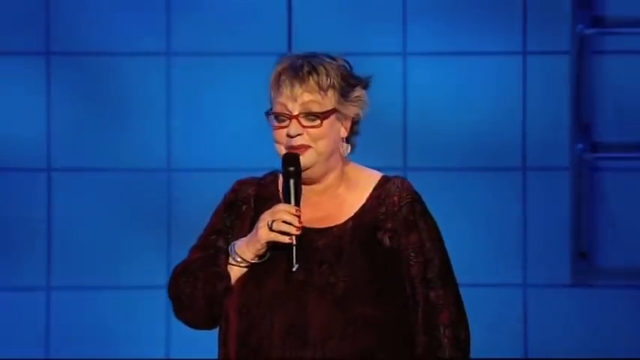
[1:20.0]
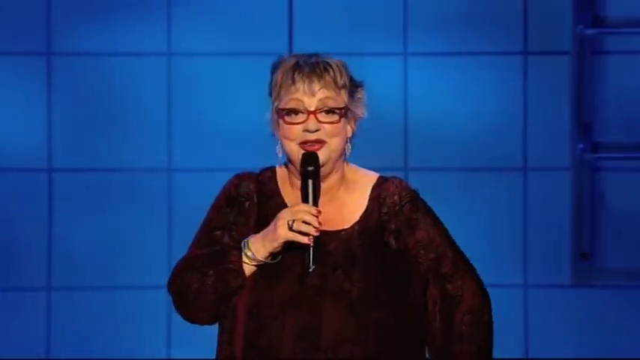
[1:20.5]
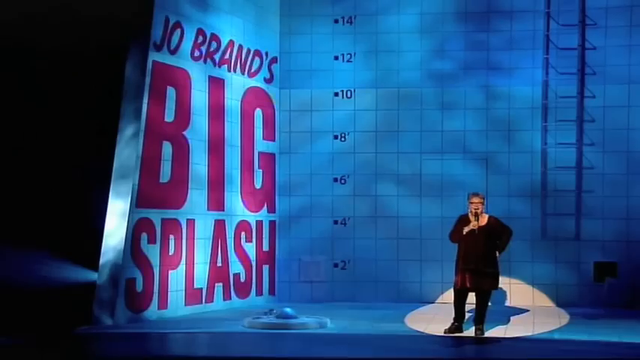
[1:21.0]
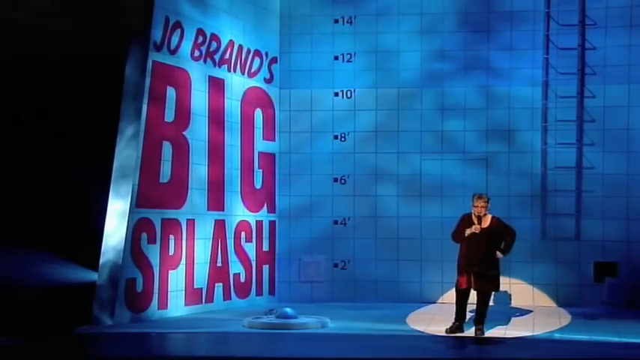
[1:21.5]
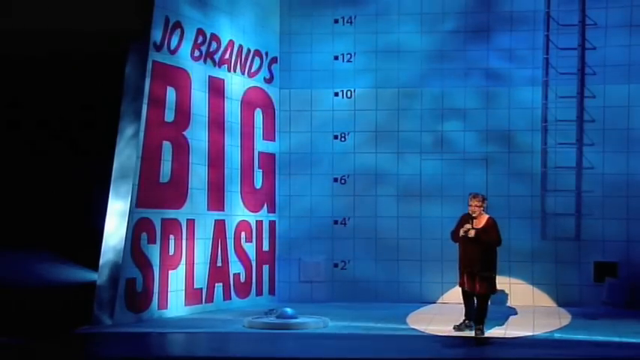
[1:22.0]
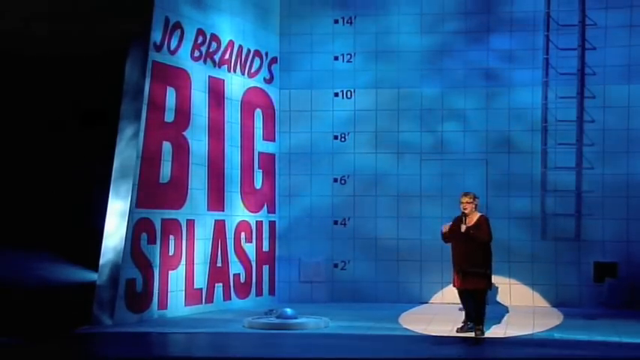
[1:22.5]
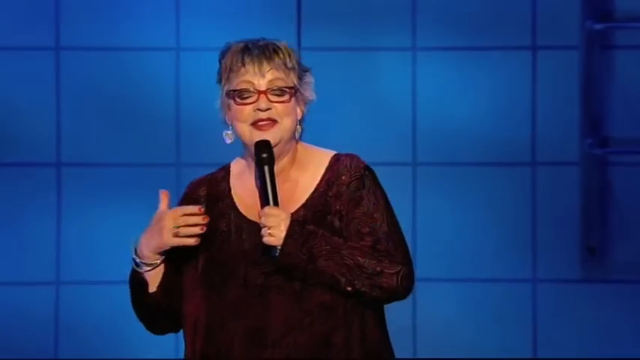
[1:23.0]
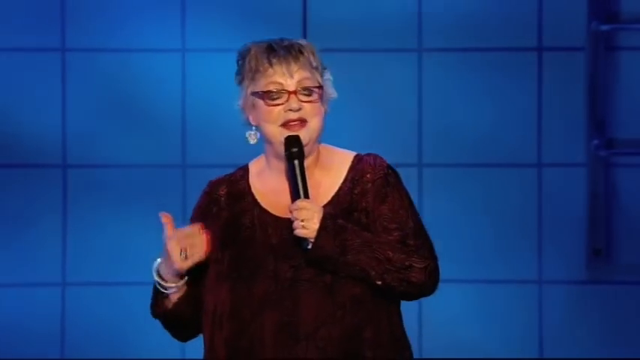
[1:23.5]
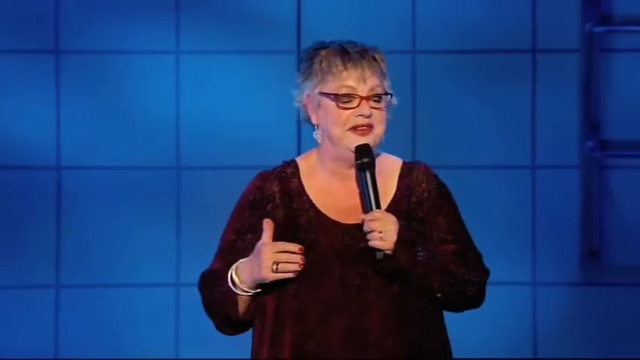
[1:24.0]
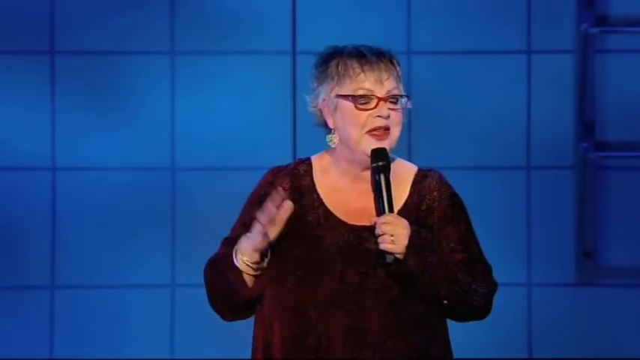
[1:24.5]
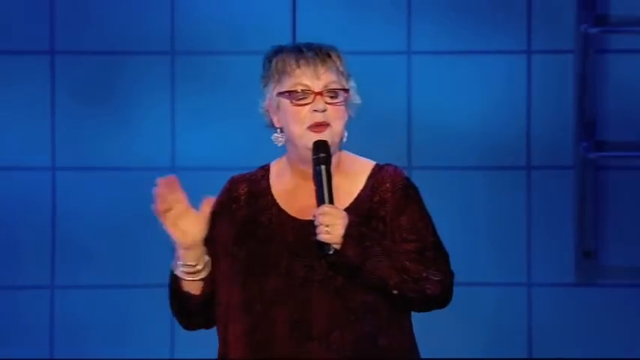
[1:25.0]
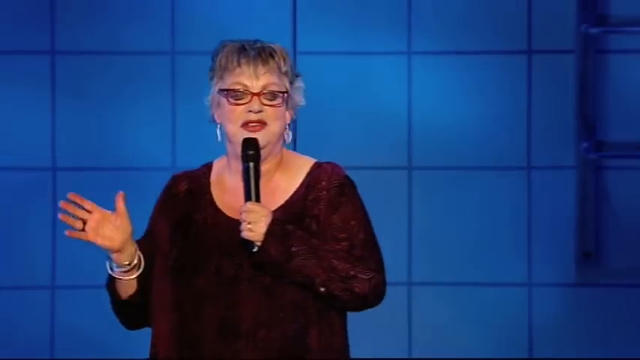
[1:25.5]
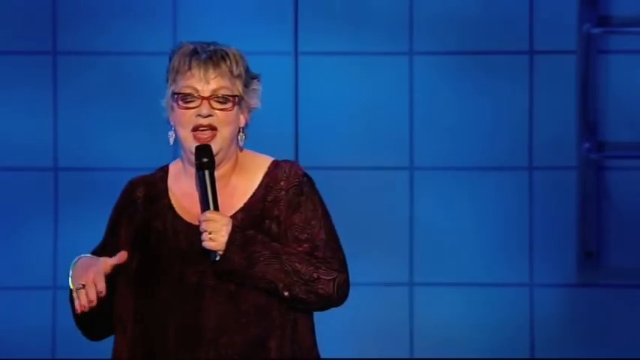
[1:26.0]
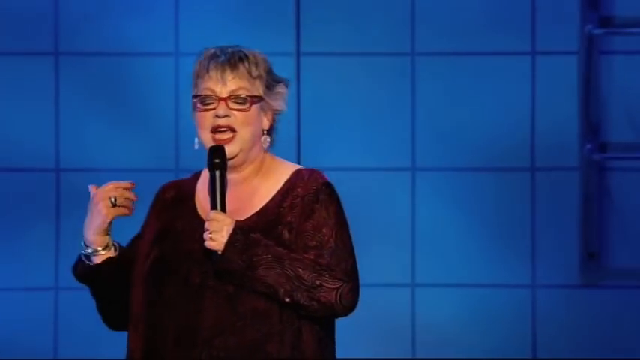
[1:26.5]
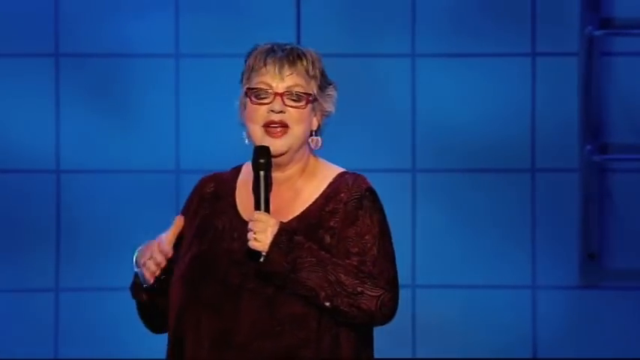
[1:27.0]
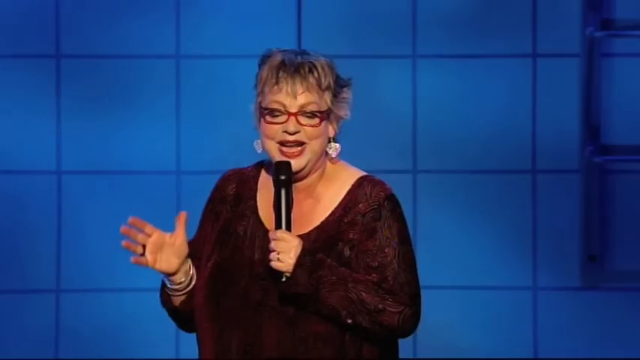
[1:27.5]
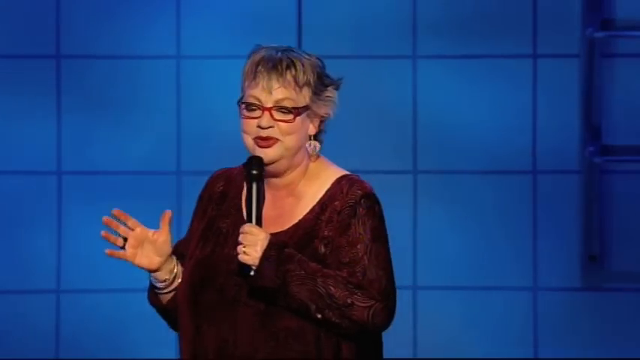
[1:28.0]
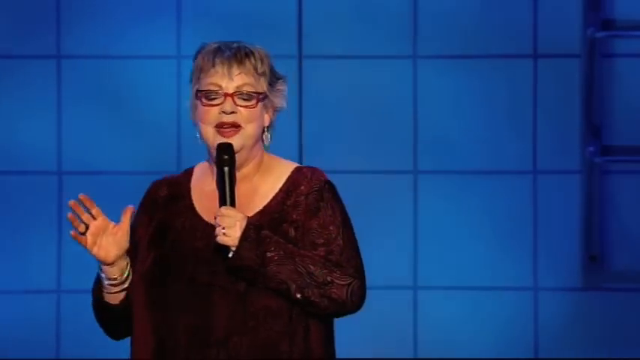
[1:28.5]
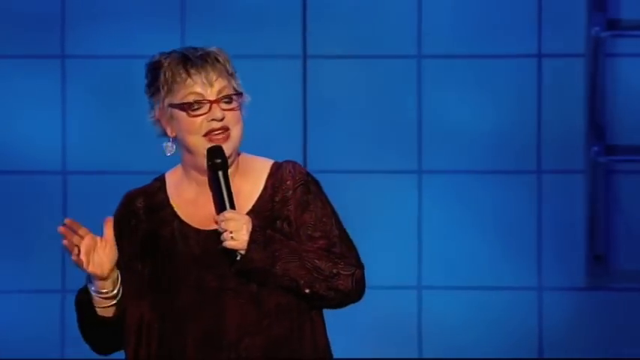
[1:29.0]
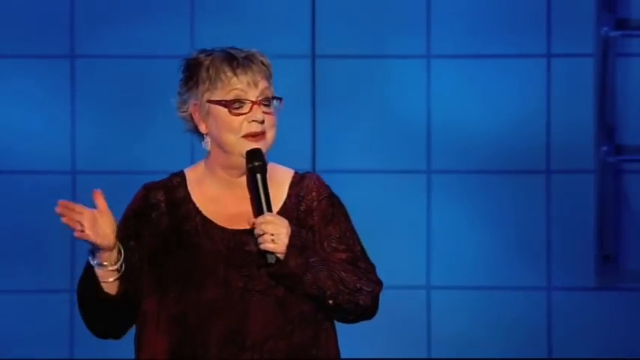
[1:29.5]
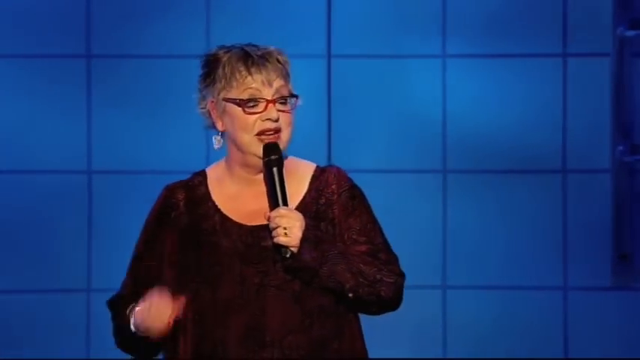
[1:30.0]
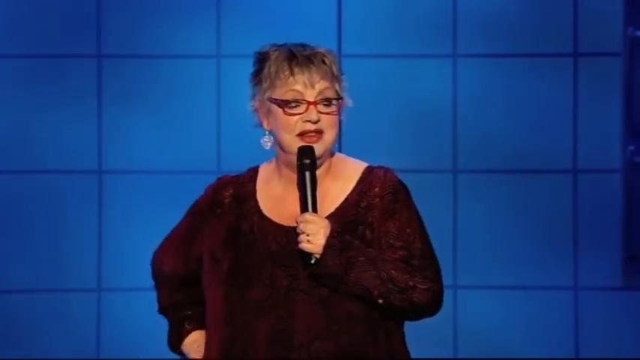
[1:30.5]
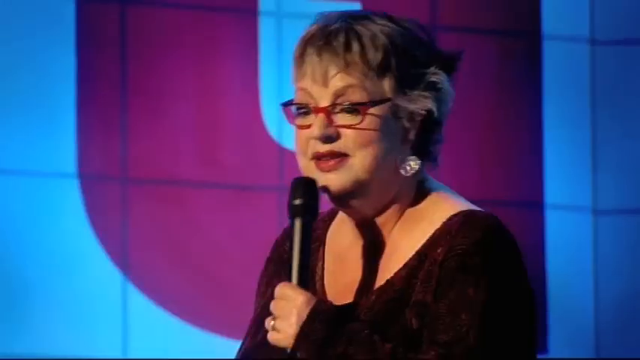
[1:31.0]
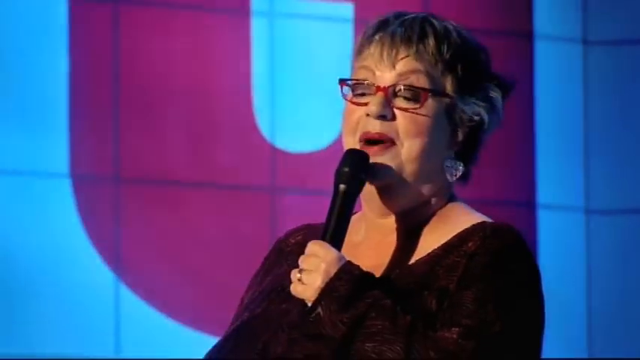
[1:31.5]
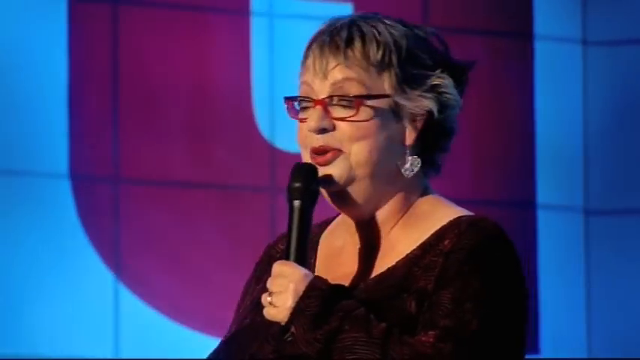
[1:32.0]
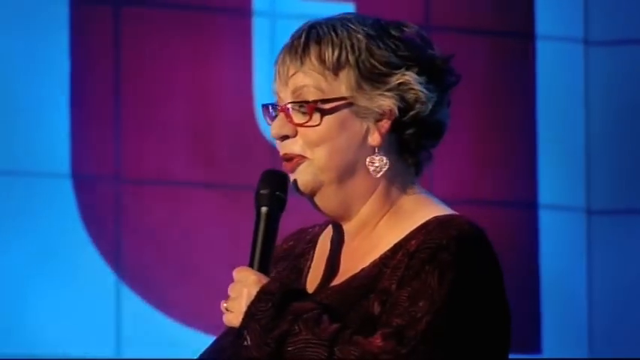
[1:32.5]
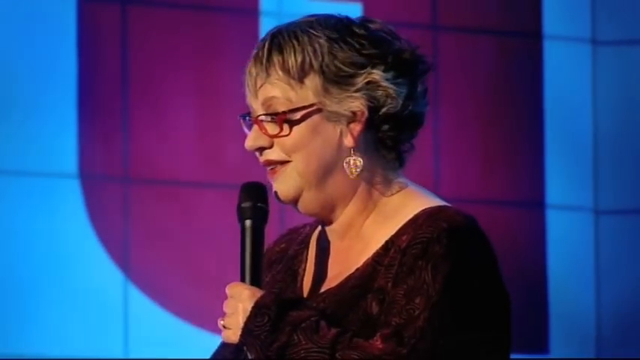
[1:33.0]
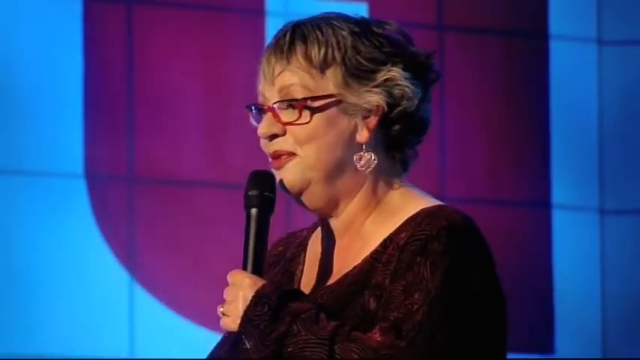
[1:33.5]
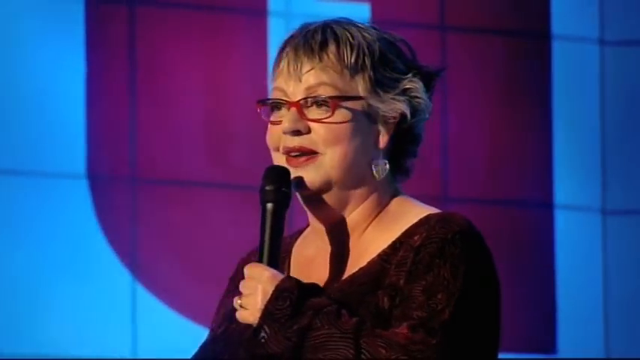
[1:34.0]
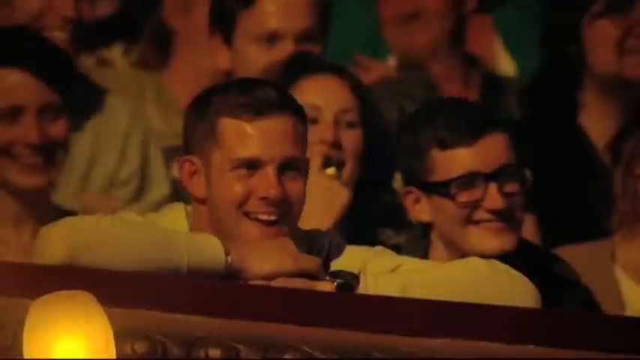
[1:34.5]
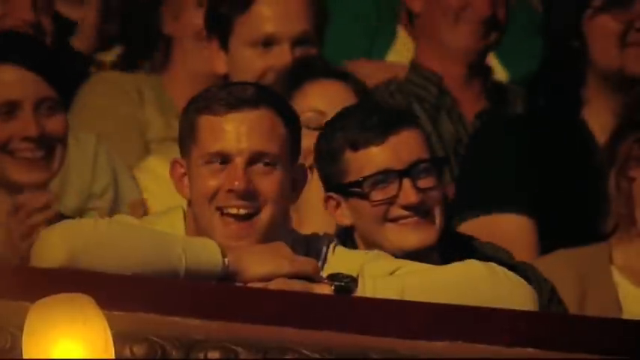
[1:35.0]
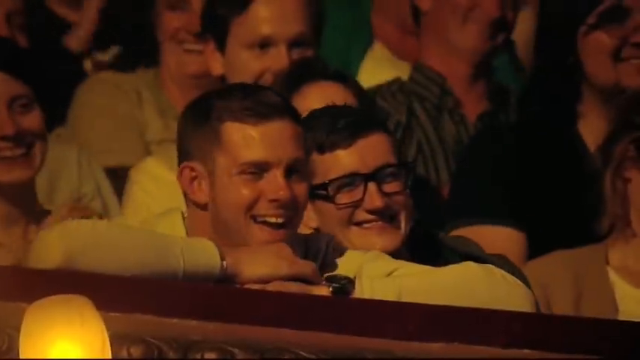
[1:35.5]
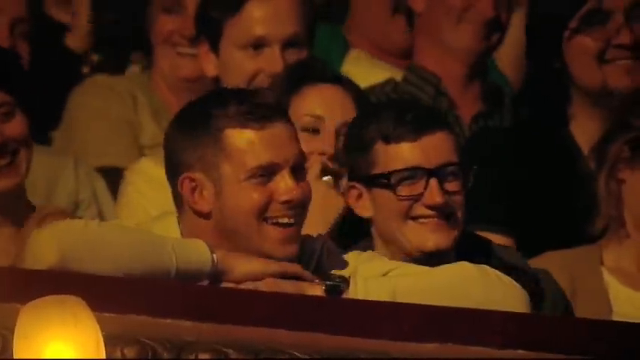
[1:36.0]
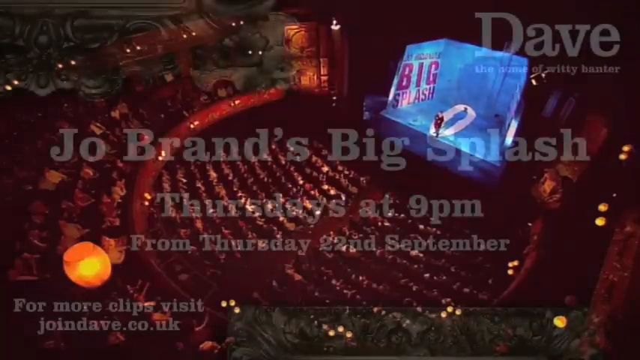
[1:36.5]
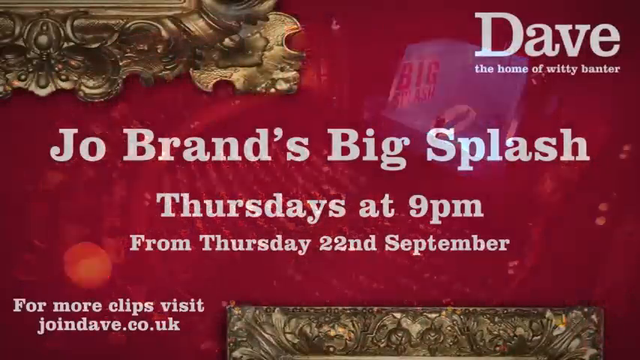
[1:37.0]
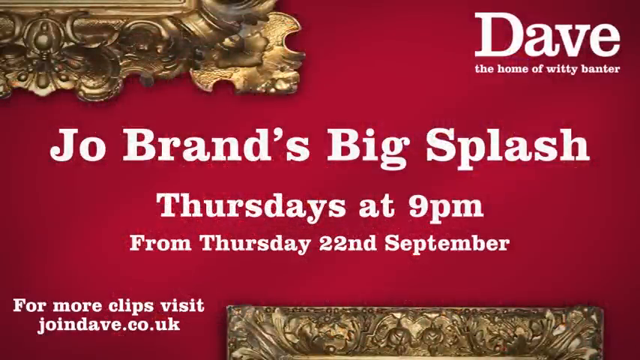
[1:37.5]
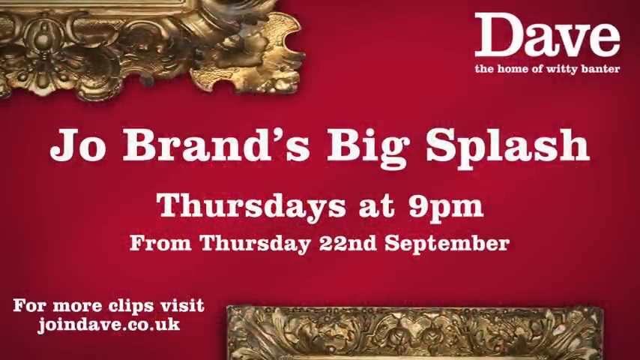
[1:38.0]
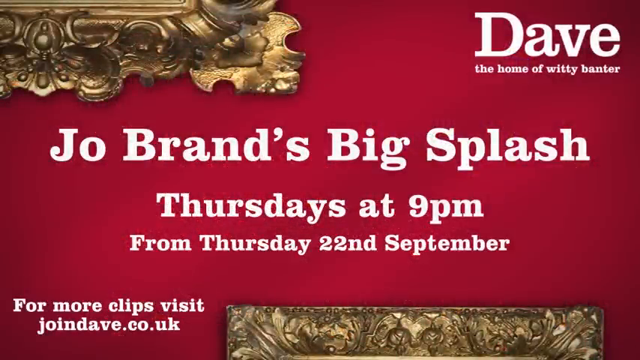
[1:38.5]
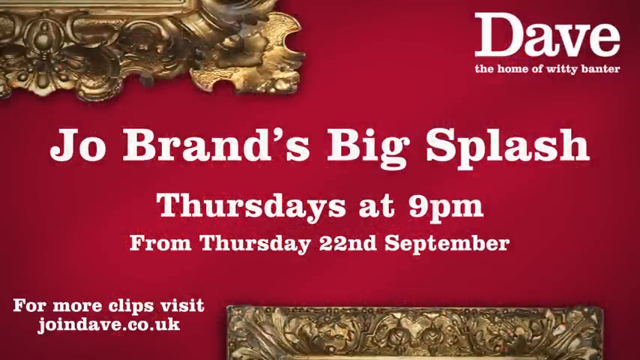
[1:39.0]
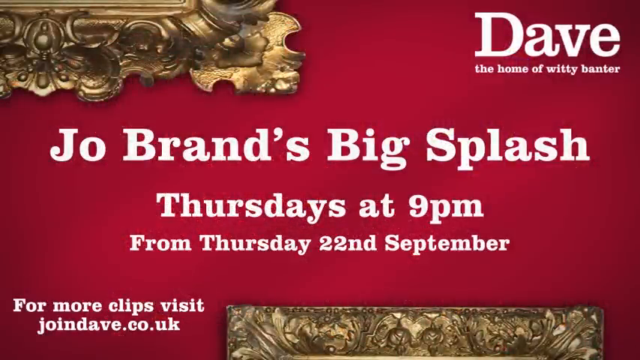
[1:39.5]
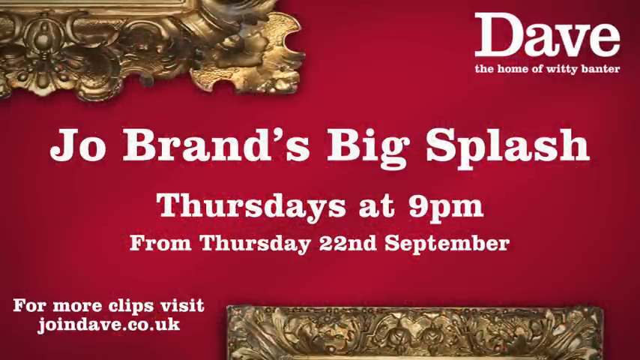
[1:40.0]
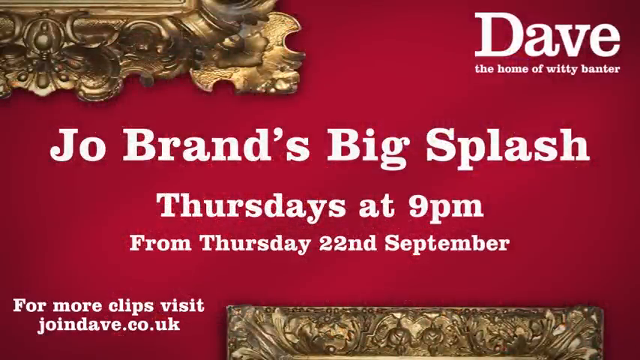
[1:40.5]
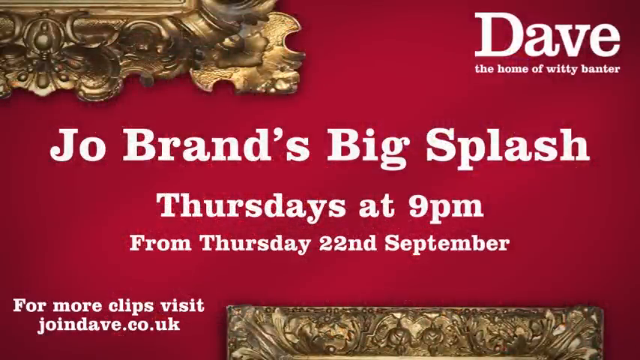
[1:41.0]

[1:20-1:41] A woman wears a purple dress, black pants and black shoes, with silver bangles on her right hand and rings on the ring fingers of both hands. Her long, dangly earrings look heart-shaped. She wears spectacles with a thick red frame, and her silver hair has black in it. The background is blue, made of blue blocks separated by dark blue lines. Holding a black microphone in her left hand, she talks to the audience, who are laughing; she appears to be a comedian. The audience is seated in an auditorium with three levels. A poster then appears reading "Dave the home of witty banter", and in bold "Joe brands big splash thursdays at 9 p.m from thursday the 22nd of september for more clips visits joindave.co.uk".